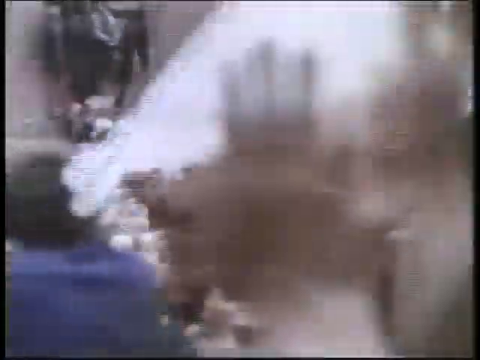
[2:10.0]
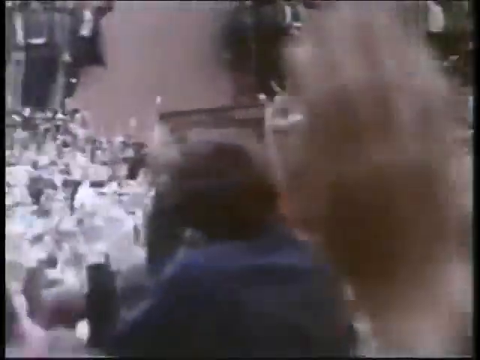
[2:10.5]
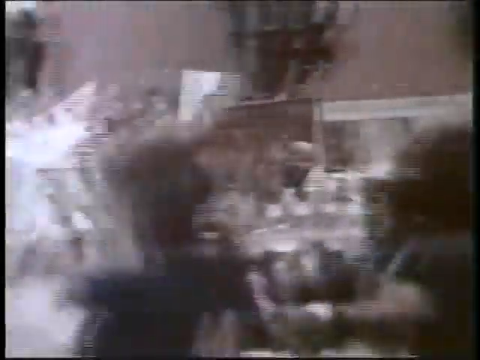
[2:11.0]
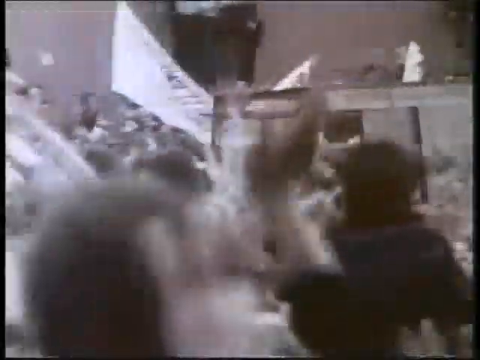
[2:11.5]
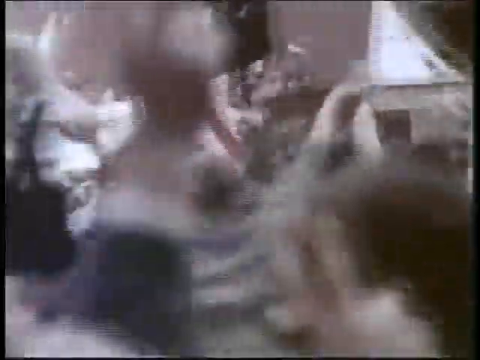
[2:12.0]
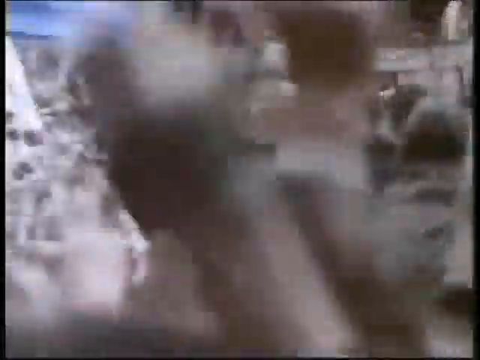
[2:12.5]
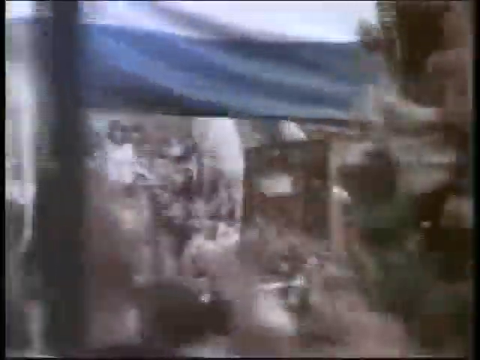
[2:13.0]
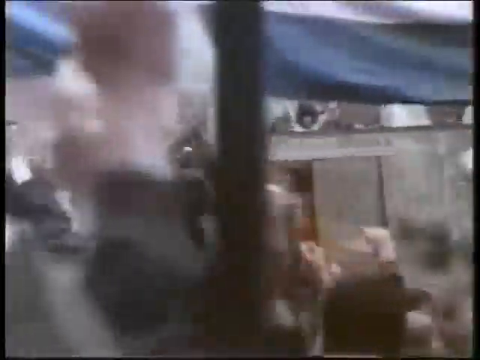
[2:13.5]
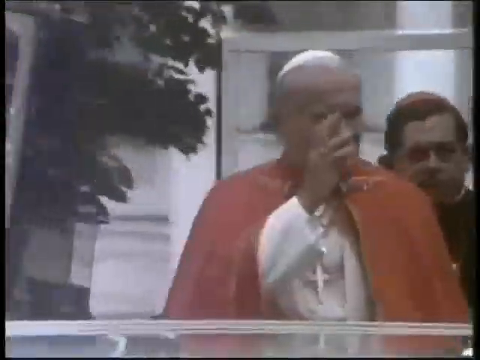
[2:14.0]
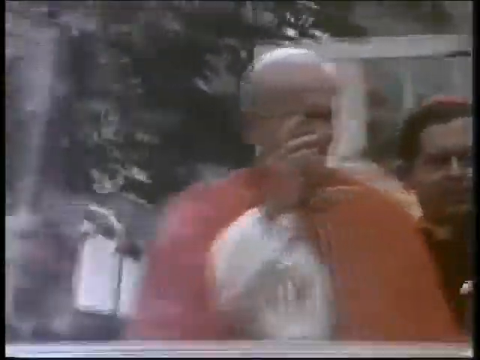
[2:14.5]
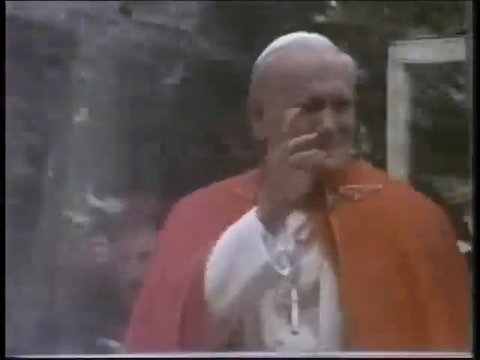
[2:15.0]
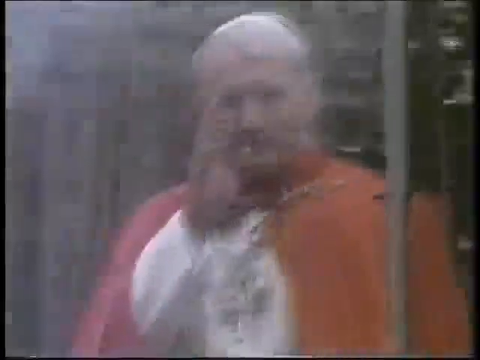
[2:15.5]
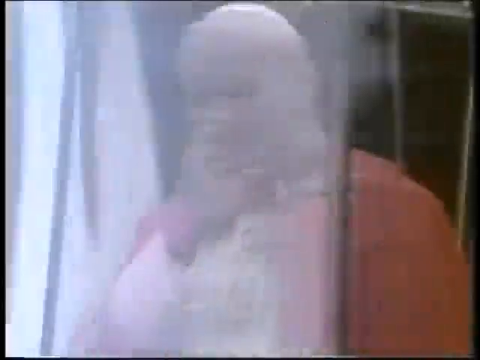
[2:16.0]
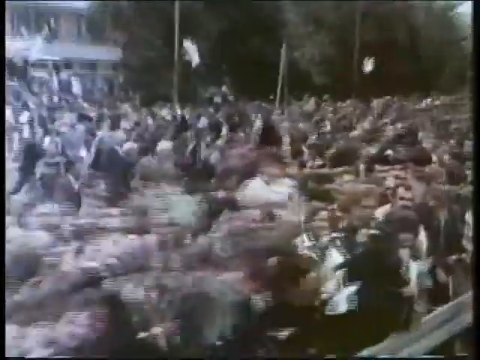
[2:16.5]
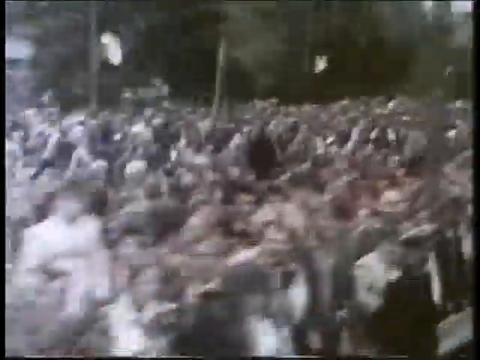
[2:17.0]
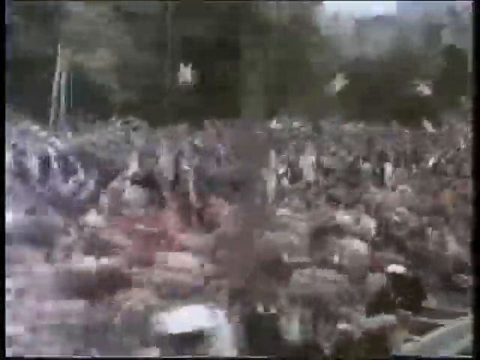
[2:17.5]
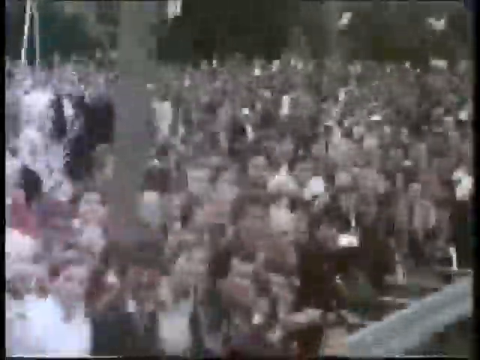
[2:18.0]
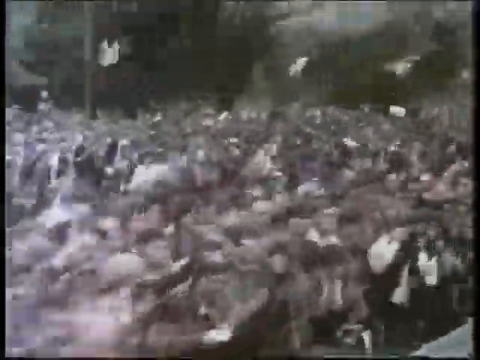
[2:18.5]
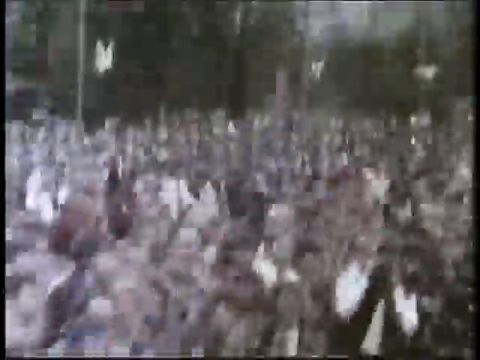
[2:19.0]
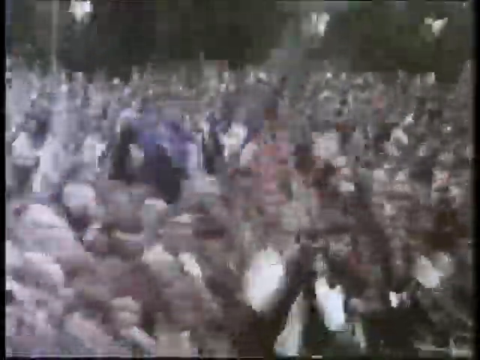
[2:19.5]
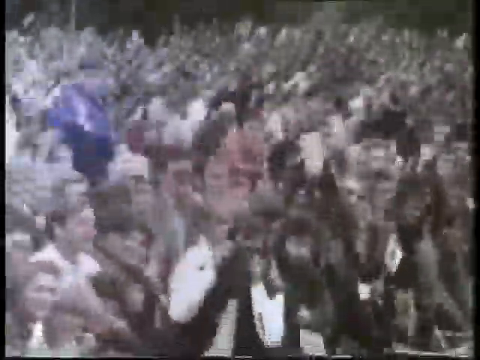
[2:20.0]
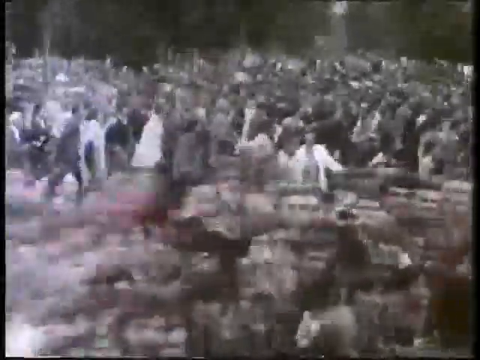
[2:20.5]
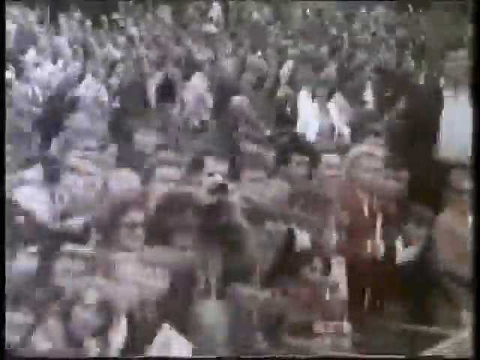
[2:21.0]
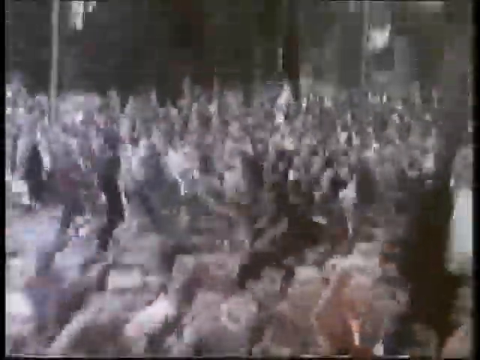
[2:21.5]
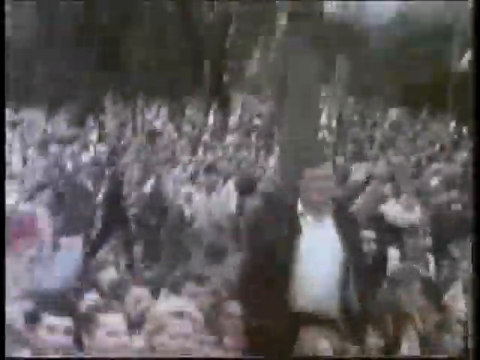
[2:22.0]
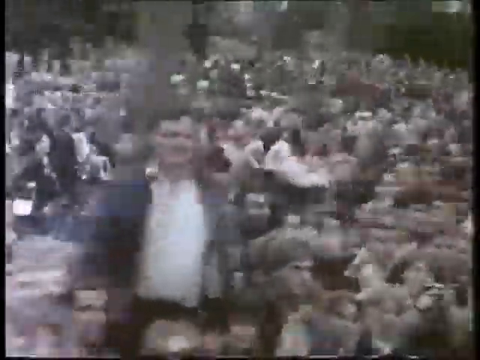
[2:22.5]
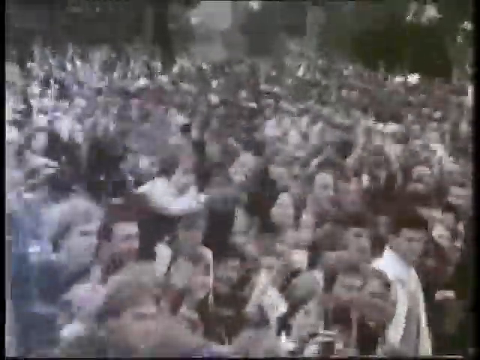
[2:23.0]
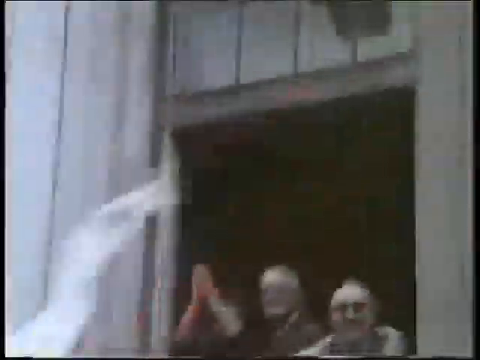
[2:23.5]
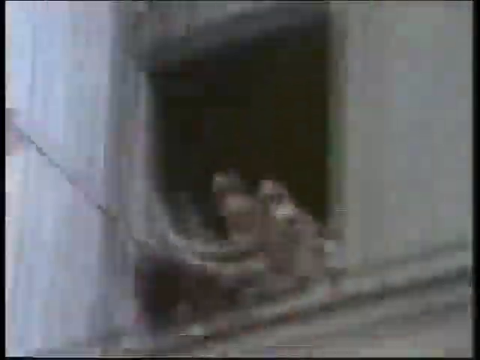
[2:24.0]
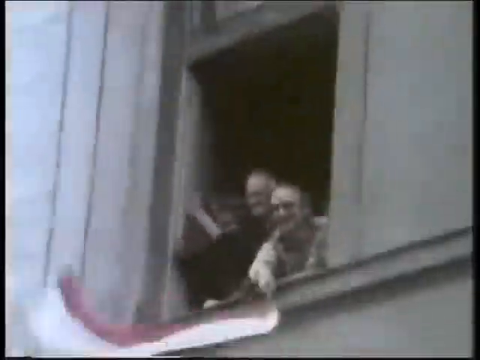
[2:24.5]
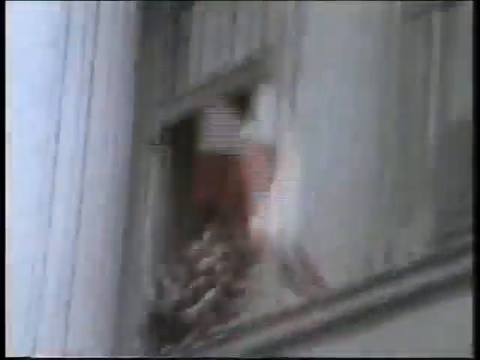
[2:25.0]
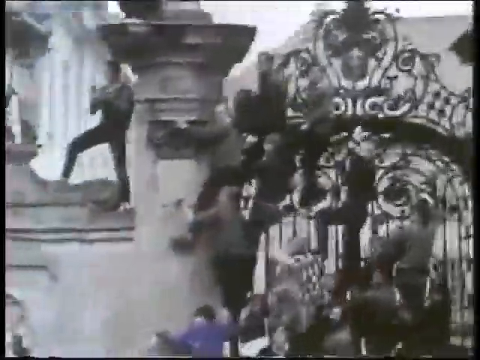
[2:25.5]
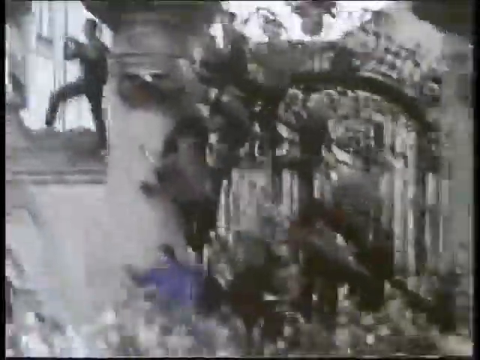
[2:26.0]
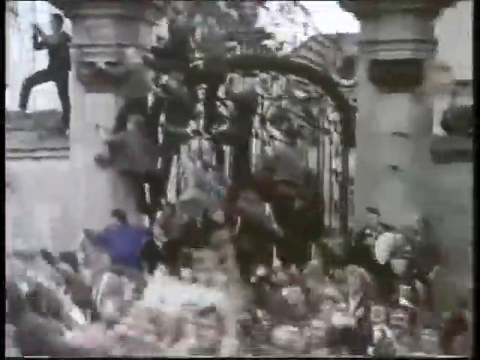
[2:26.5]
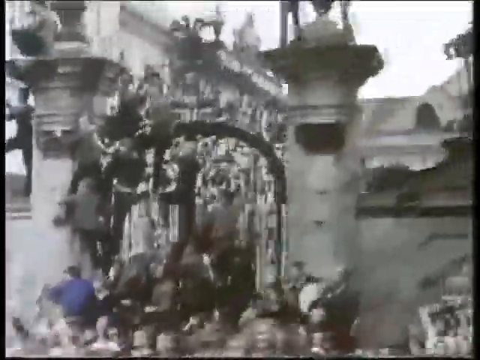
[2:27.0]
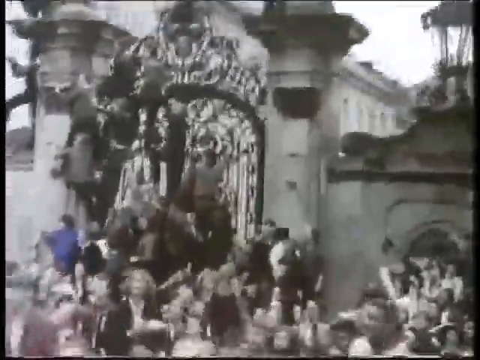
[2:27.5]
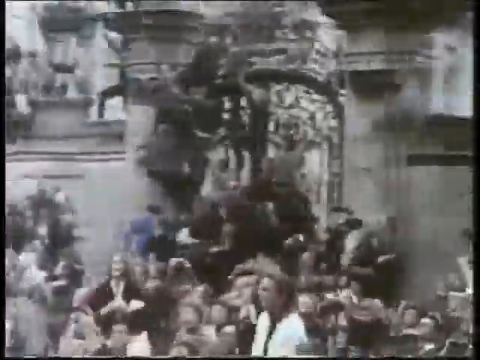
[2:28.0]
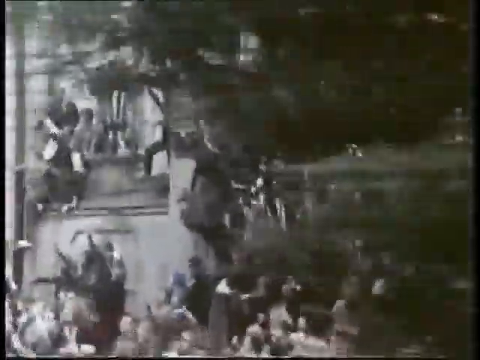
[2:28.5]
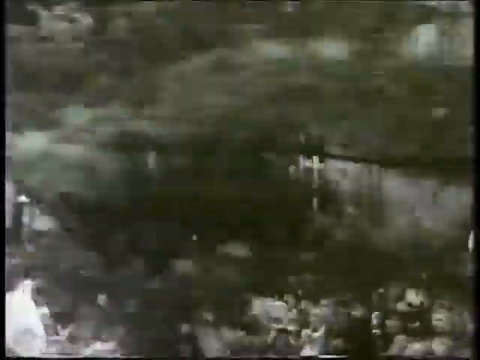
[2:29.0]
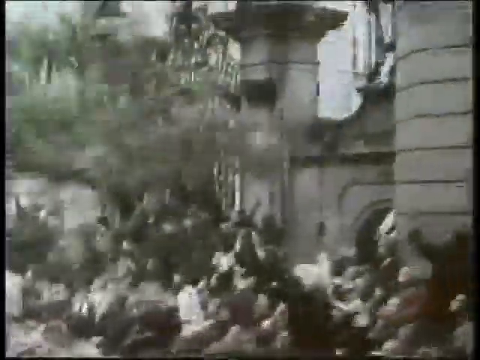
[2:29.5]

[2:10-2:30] Footage shows crowds of people celebrating. It starts with the car in the center, with the top of the vehicle partly visible; the Pope stands behind bulletproof glass. A close-up shows him waving his right hand gently to the crowds, wearing a red shawl, white undergarments and a skull cap, standing behind the glass as frantic crowds run to keep up with the procession. Thousands and thousands of people stand watching and waving flags. A person in a window waves a red and white flag, and the scene cuts to people climbing very ornate iron gates and a concrete wall, hanging onto the wall and the gates, while people clap.